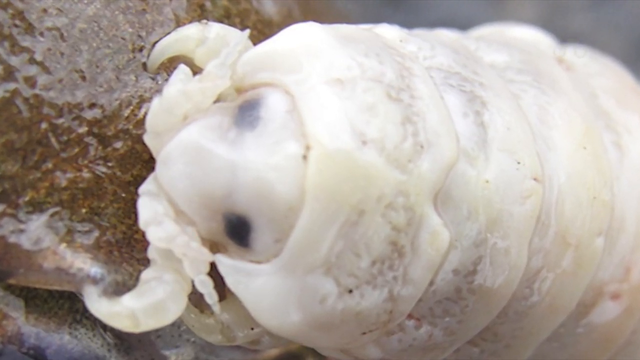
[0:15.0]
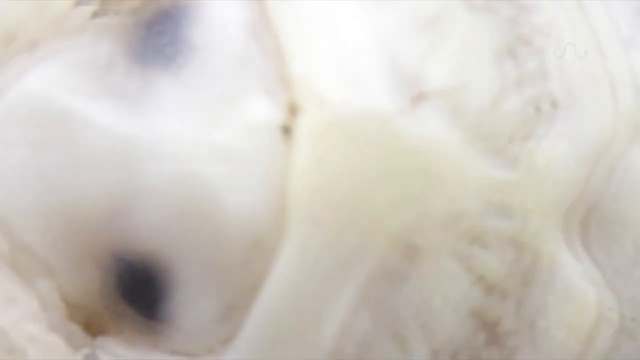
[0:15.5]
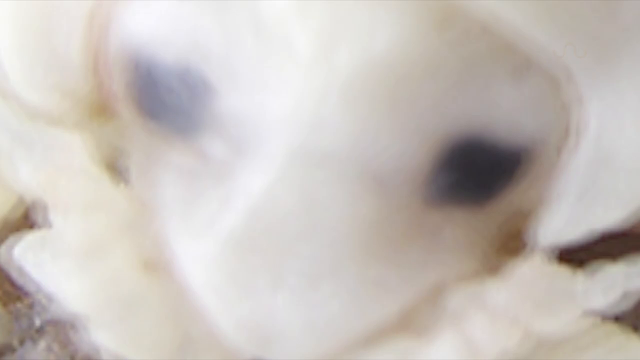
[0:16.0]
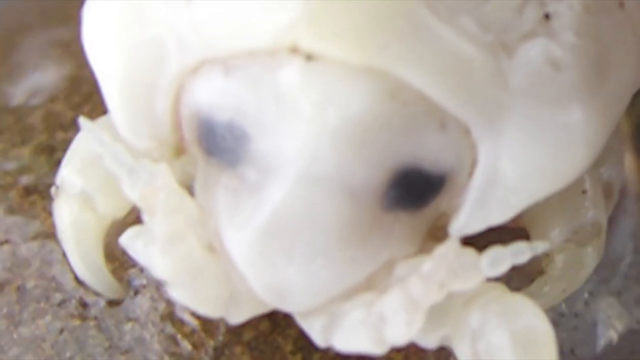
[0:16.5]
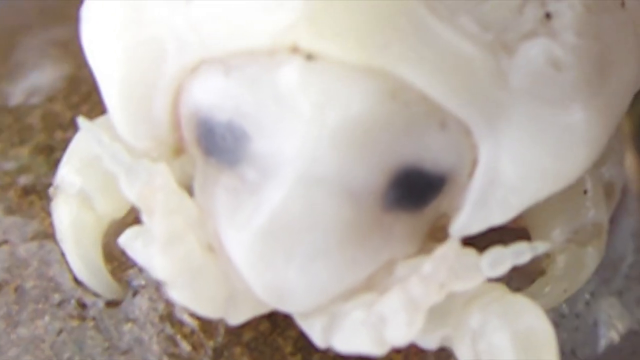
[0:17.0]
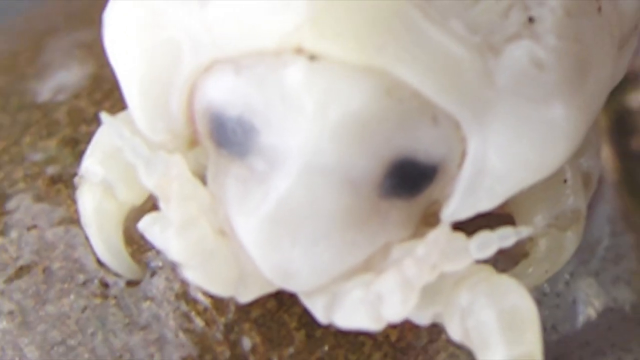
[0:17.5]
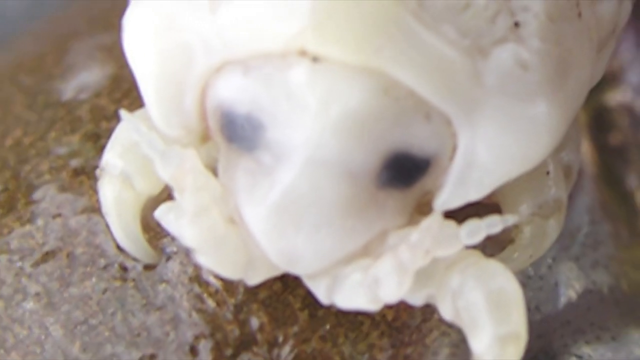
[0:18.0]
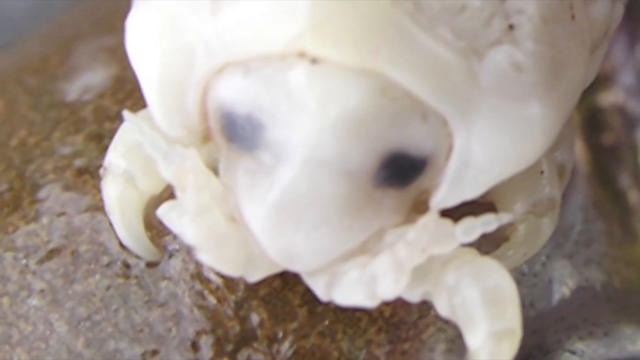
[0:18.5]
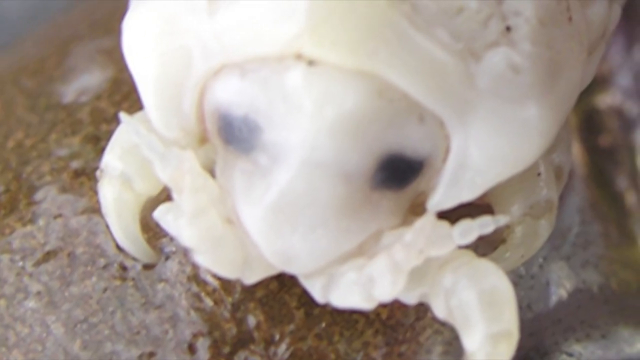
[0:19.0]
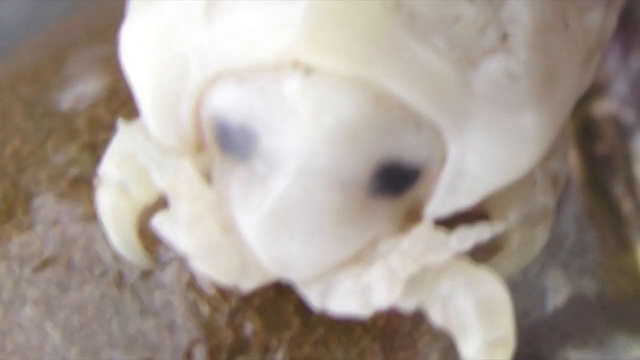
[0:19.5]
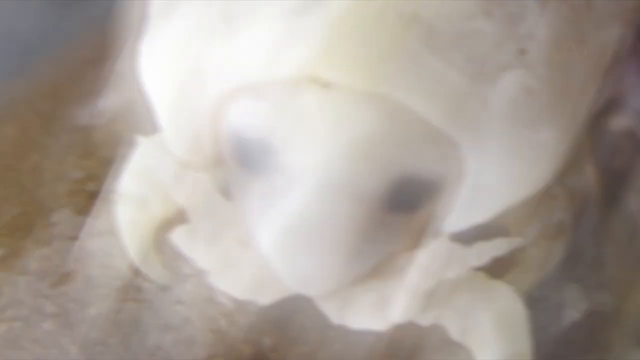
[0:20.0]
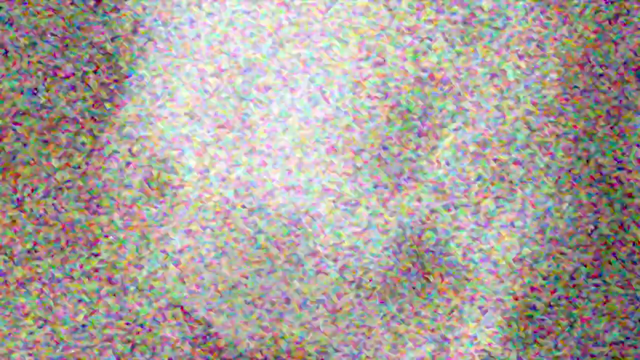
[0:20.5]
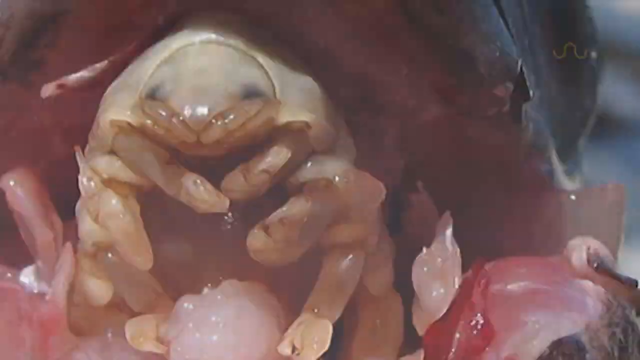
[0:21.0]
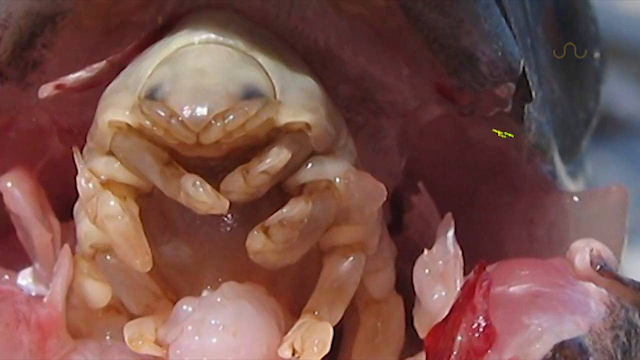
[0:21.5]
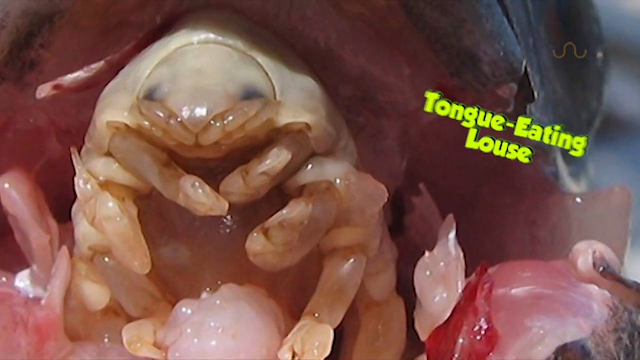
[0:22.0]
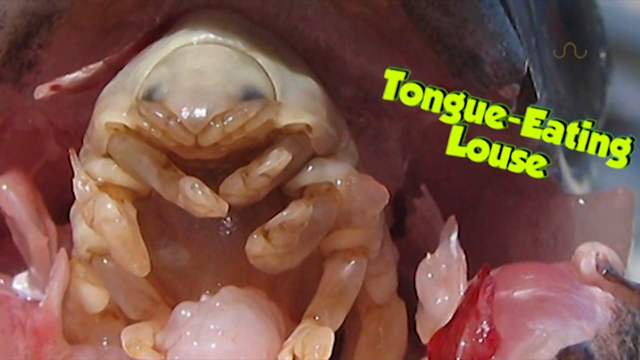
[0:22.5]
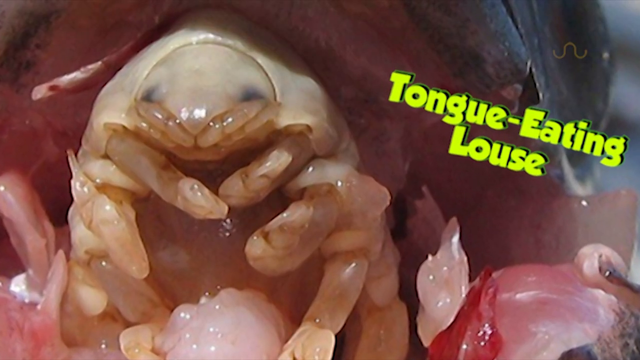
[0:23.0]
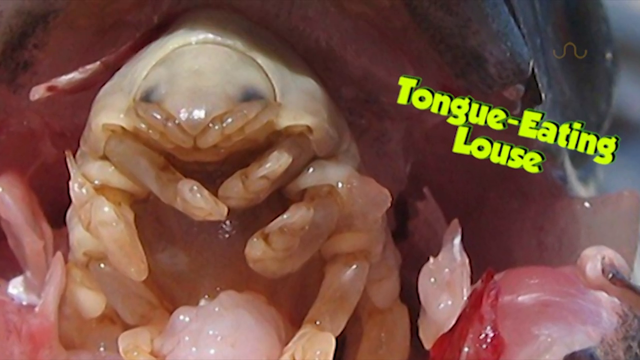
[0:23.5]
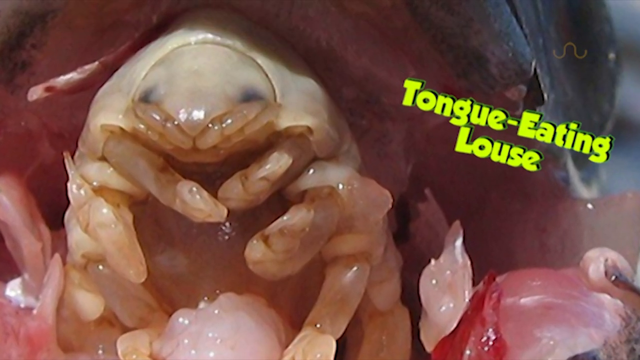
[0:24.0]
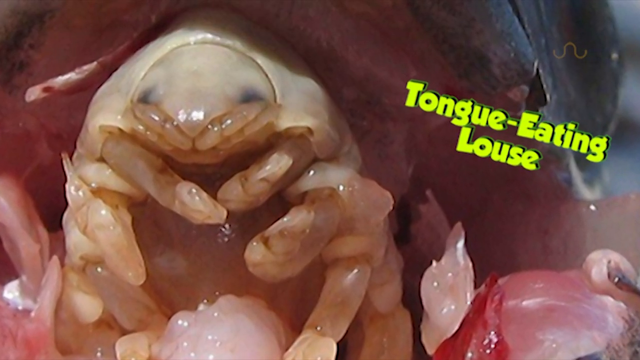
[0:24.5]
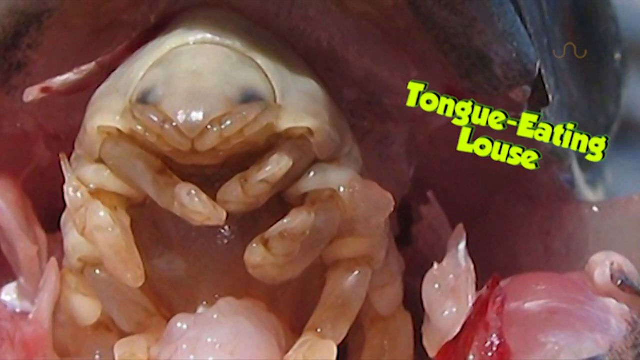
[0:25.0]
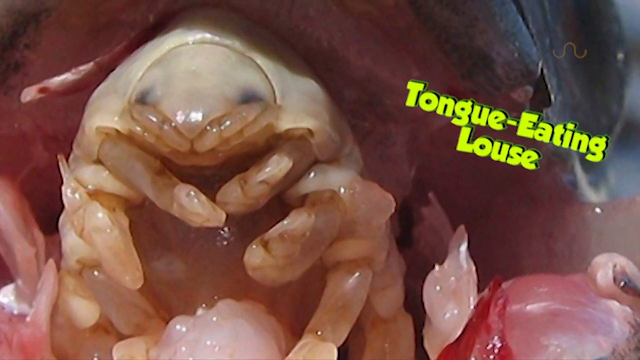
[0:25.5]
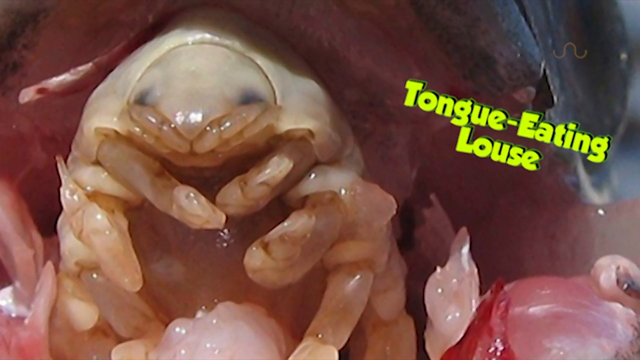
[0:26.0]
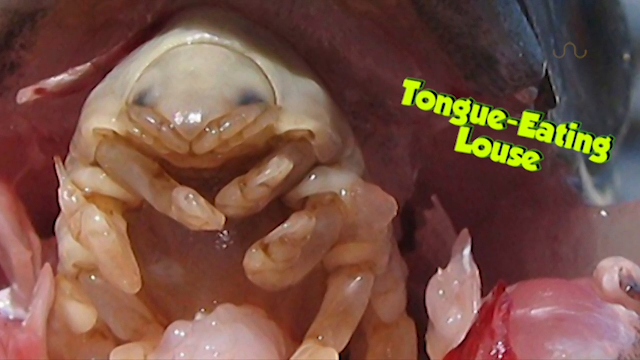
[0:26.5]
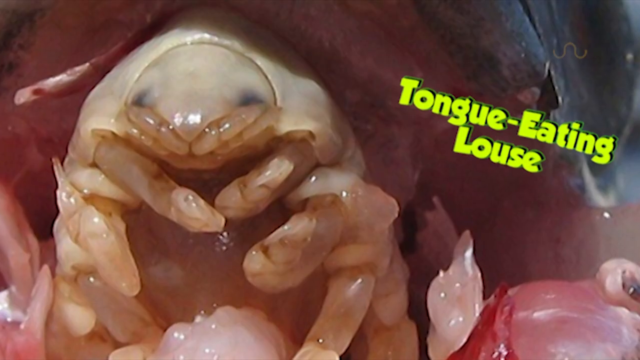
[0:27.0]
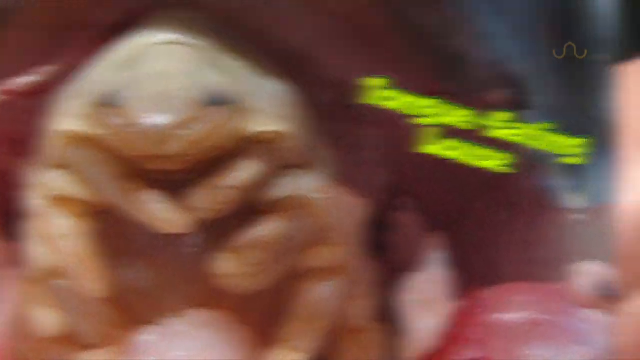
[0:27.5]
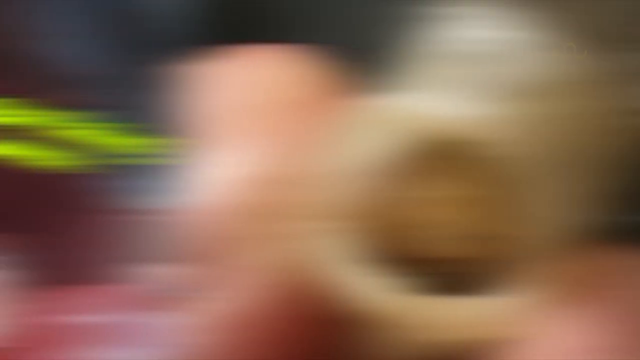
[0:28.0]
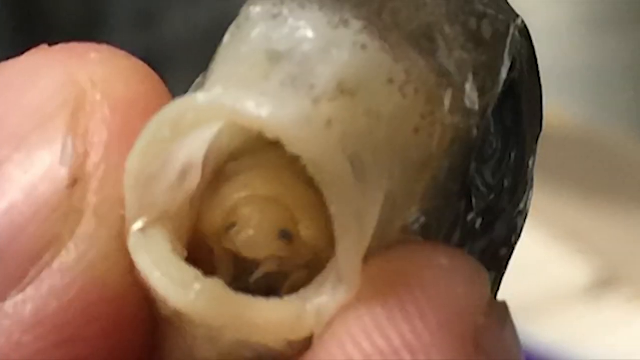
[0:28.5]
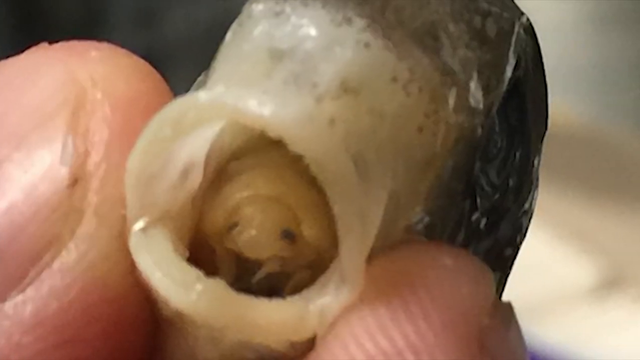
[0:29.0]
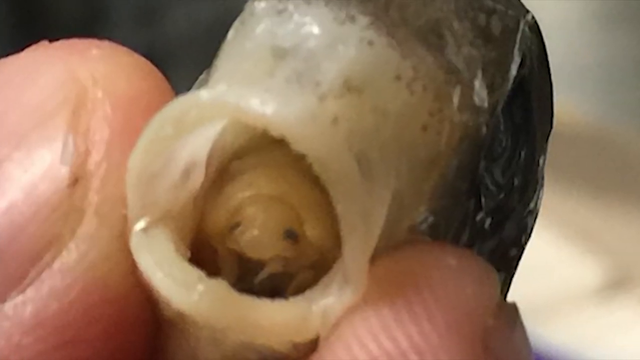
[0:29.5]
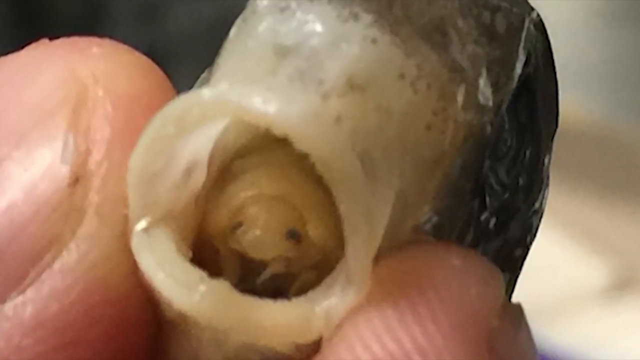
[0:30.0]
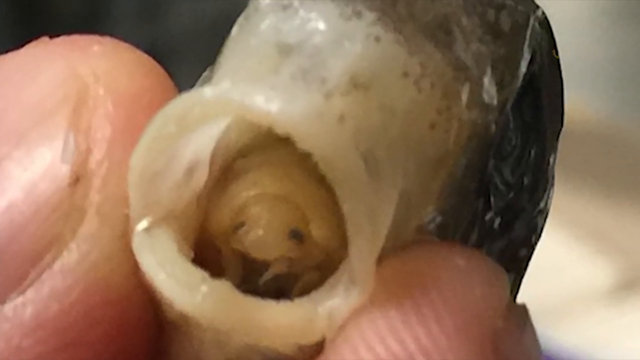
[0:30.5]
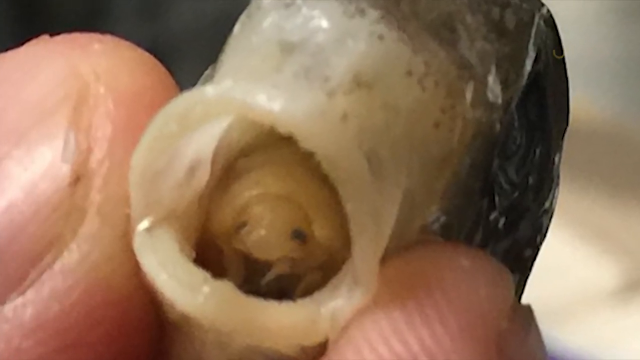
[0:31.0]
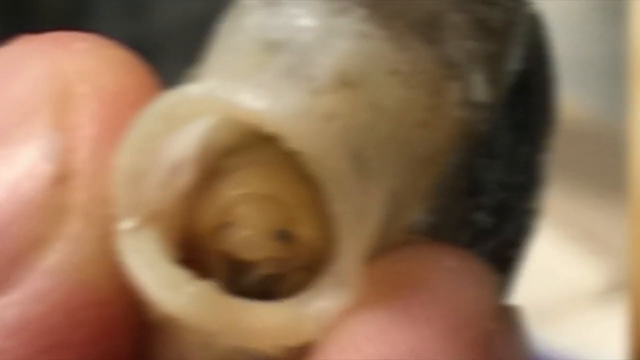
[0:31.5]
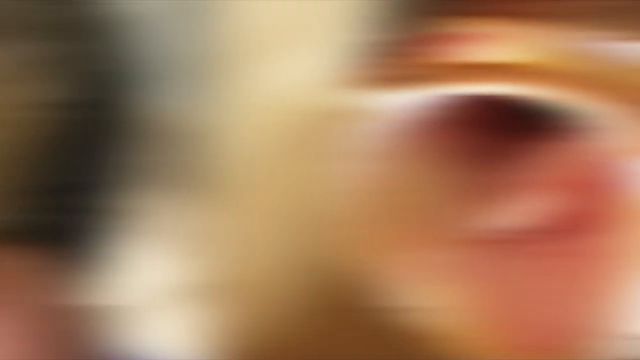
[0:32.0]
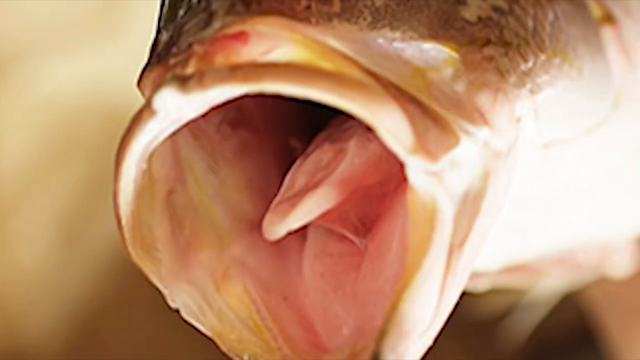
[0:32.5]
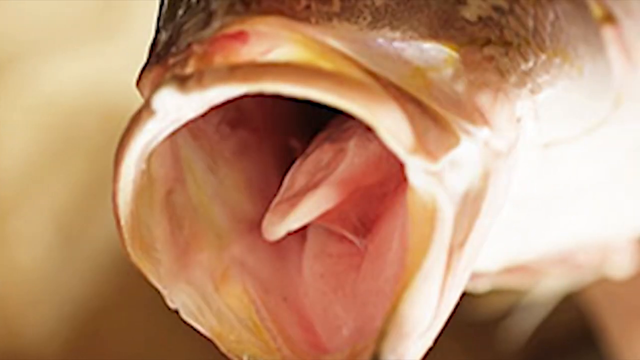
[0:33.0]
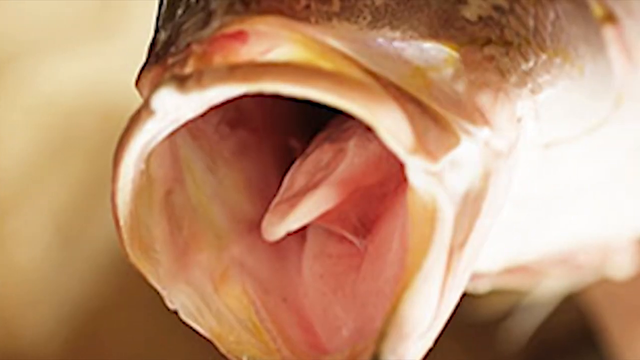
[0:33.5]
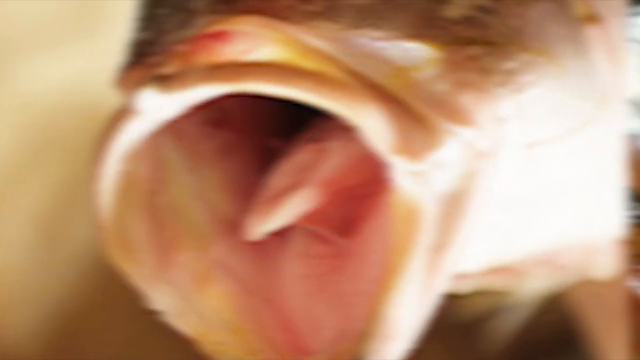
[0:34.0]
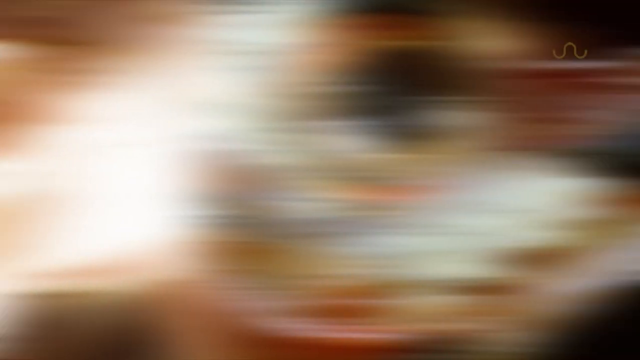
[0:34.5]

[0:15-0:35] The view zooms in again on the white mite, which has black eyes and shakes around. The words "tongue-eating louse" appear in very bright green. Another view of the tongue-eating louse follows, apparently showing it living inside a fish's mouth; inside the fish it is more of a light brown color. Fingers hold the fish's mouth open. The louse is a parasite of some sort that lives inside the fish's mouth, eats the fish's tongue and replaces the tongue with itself.